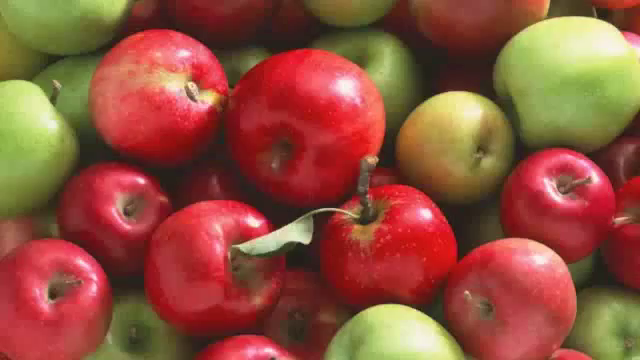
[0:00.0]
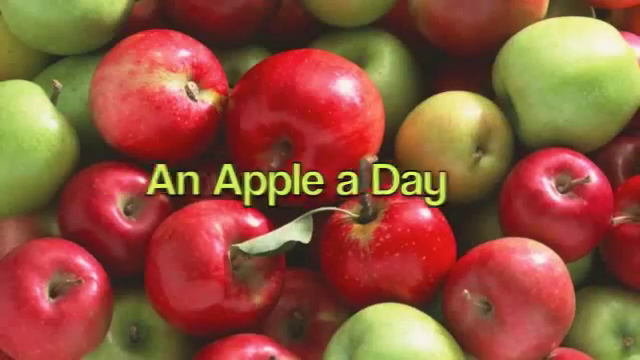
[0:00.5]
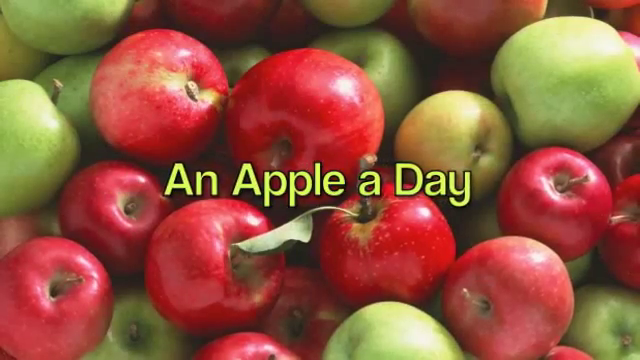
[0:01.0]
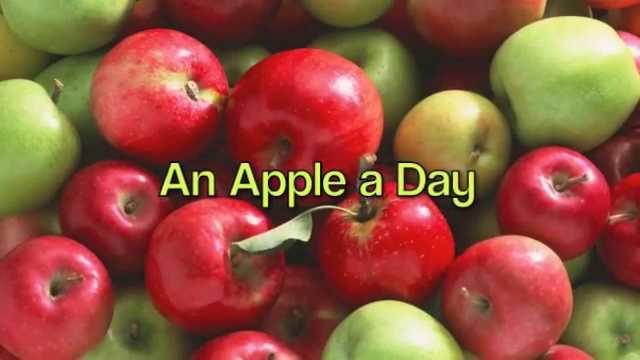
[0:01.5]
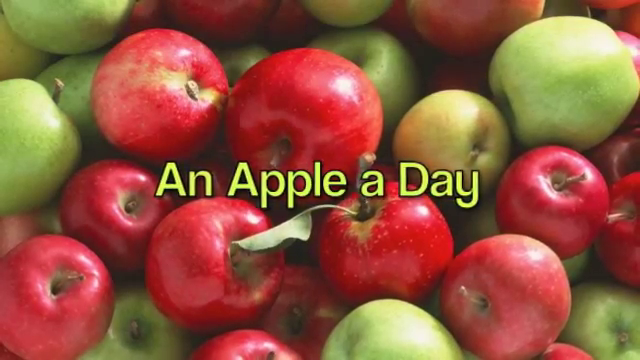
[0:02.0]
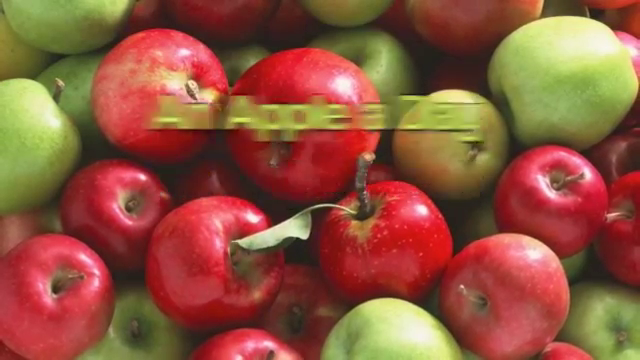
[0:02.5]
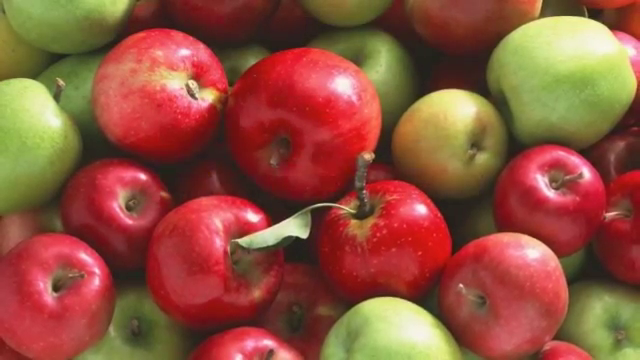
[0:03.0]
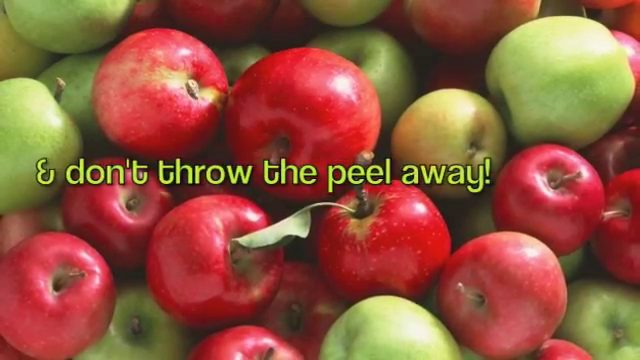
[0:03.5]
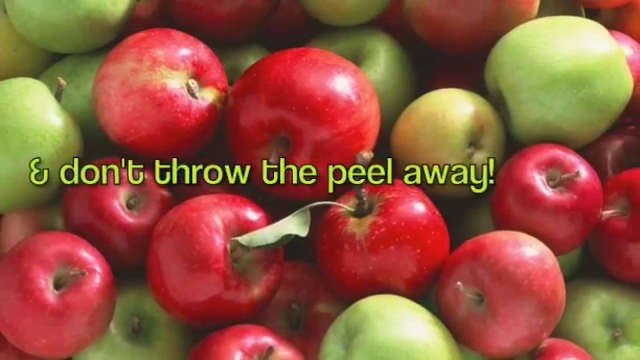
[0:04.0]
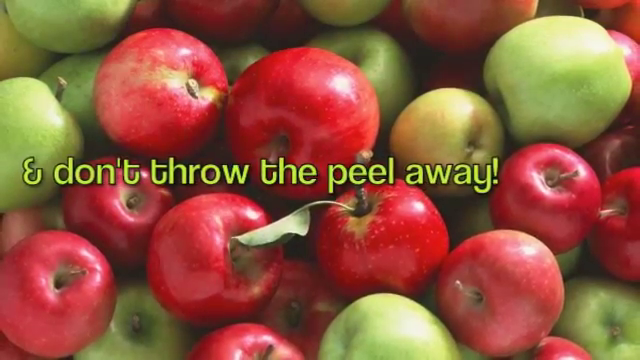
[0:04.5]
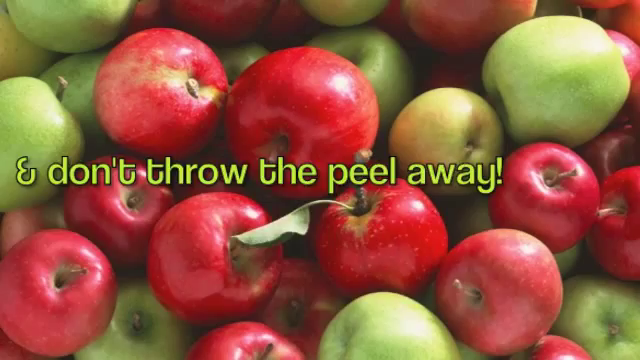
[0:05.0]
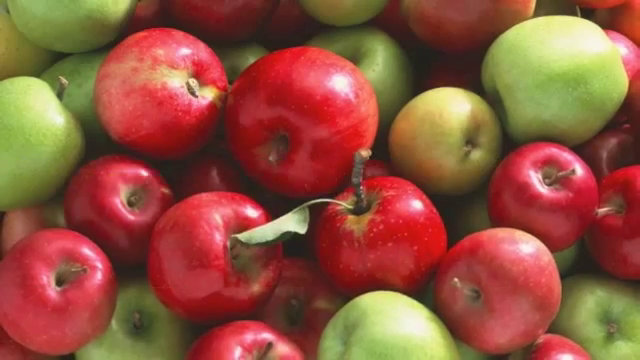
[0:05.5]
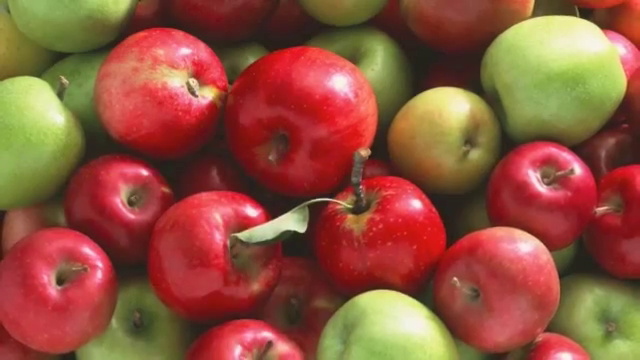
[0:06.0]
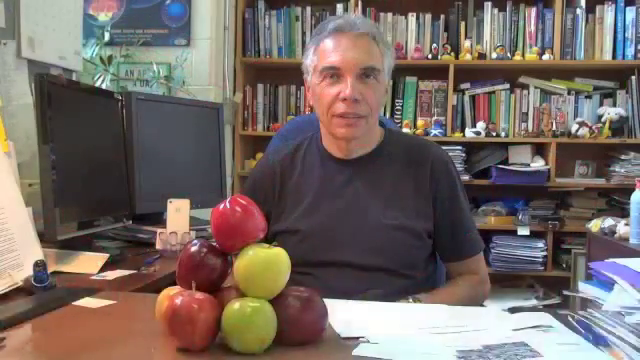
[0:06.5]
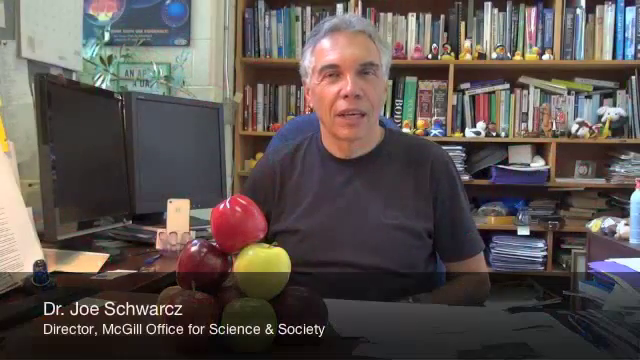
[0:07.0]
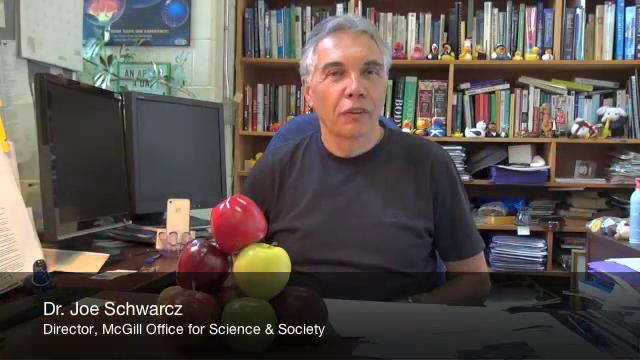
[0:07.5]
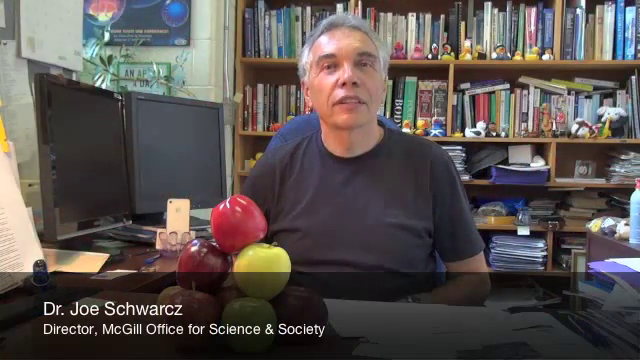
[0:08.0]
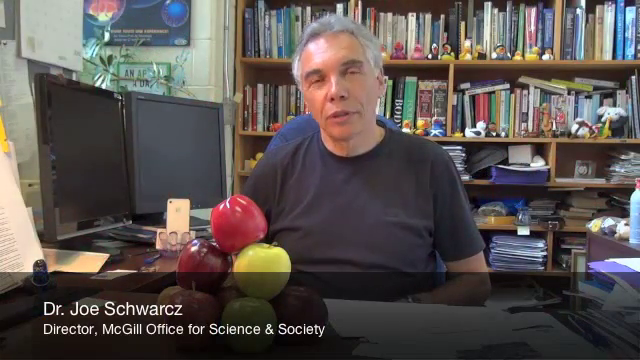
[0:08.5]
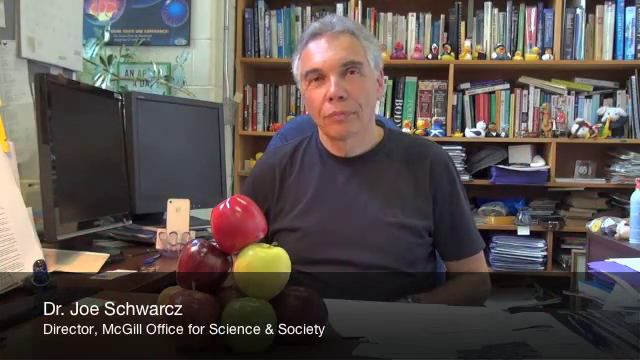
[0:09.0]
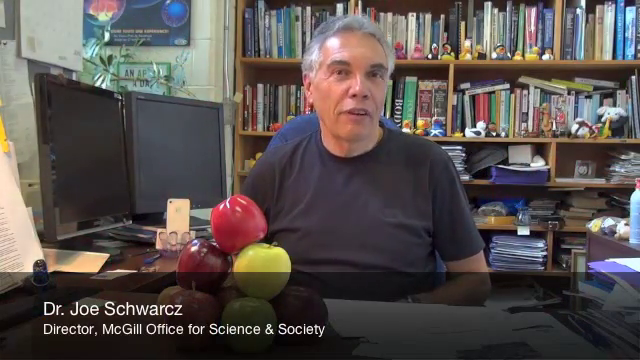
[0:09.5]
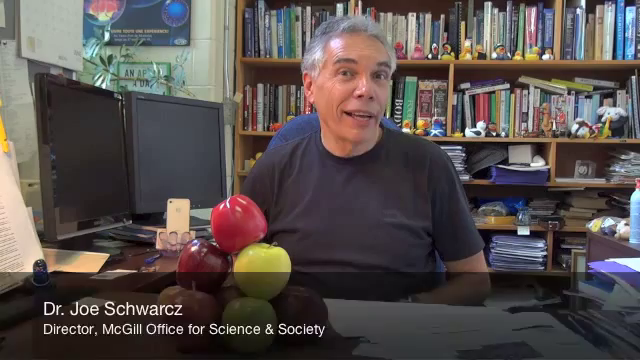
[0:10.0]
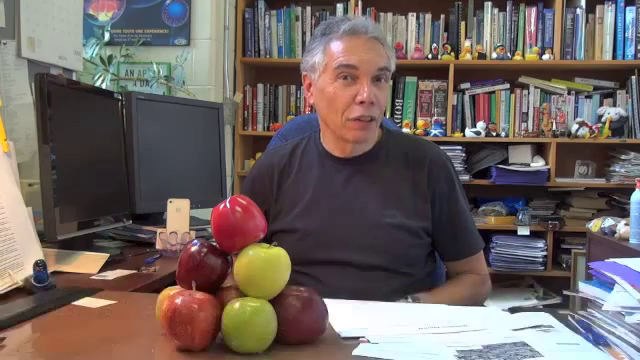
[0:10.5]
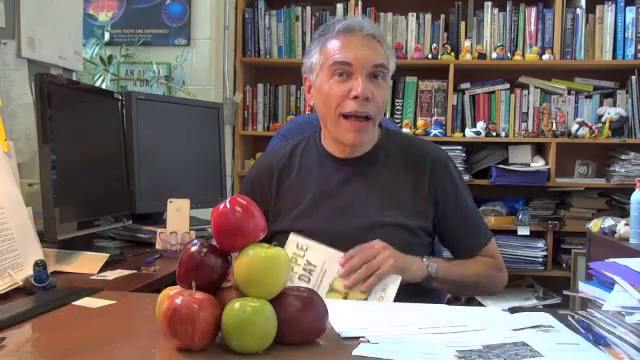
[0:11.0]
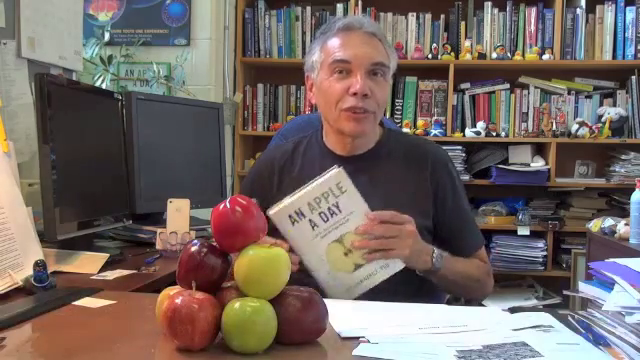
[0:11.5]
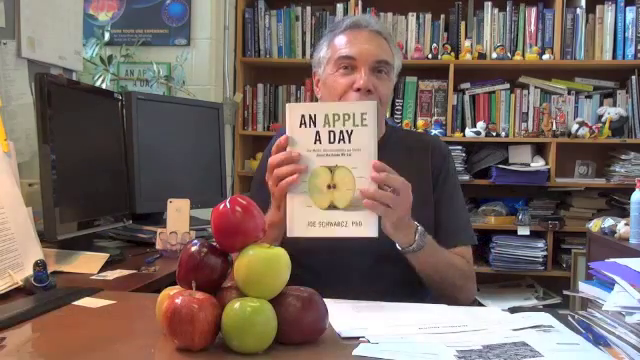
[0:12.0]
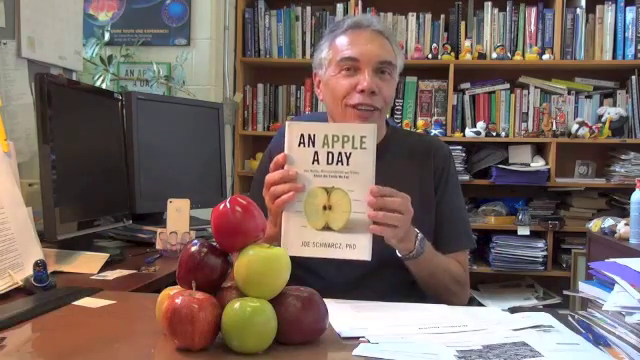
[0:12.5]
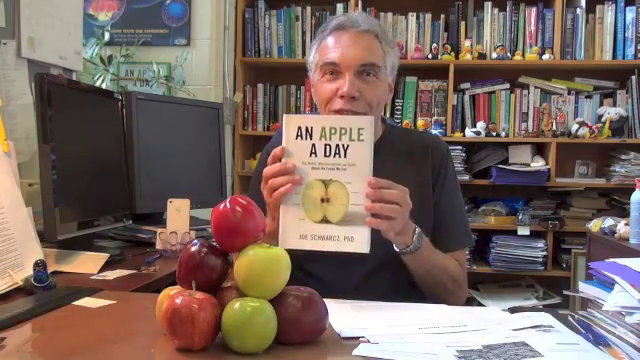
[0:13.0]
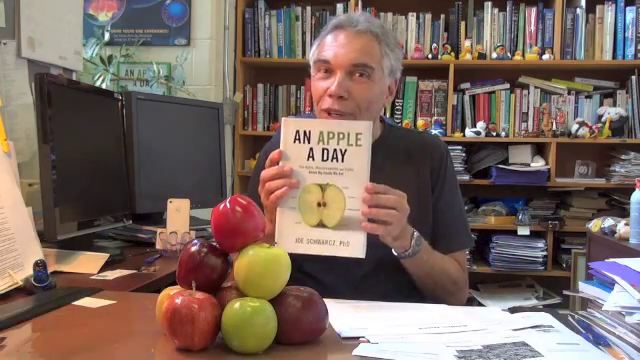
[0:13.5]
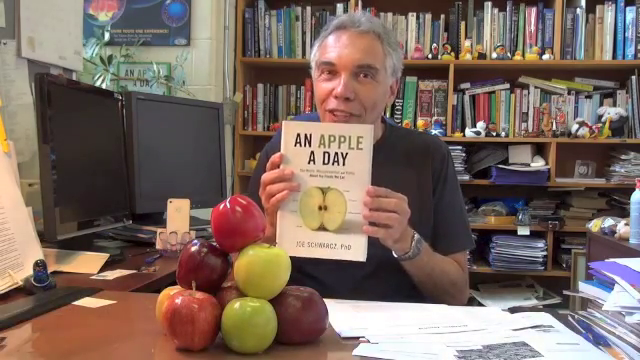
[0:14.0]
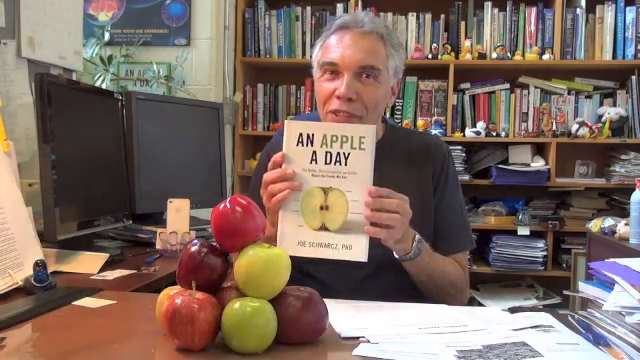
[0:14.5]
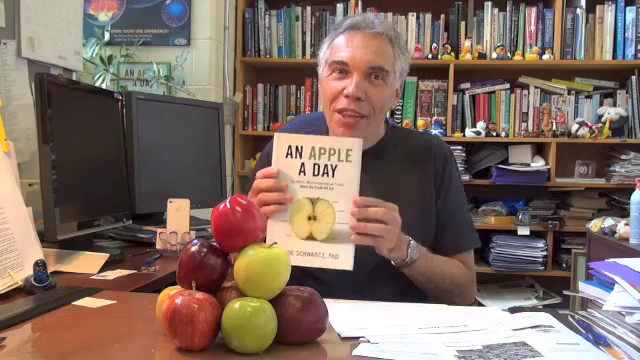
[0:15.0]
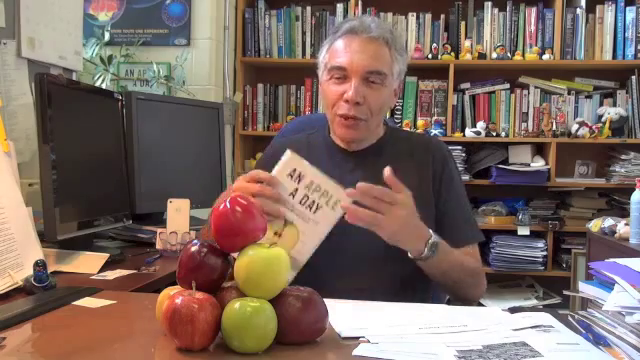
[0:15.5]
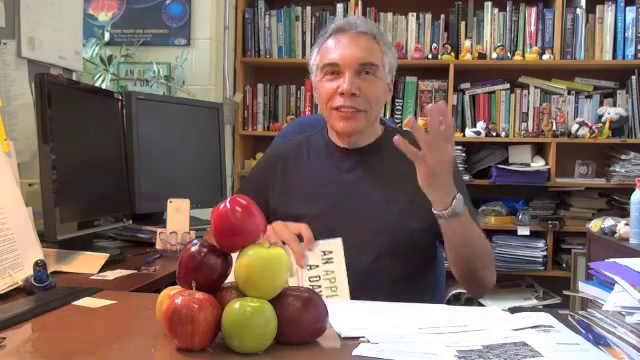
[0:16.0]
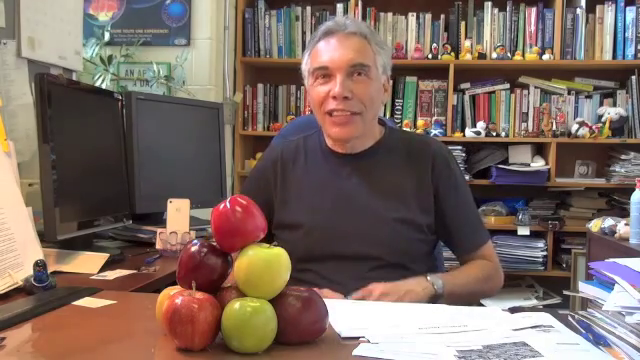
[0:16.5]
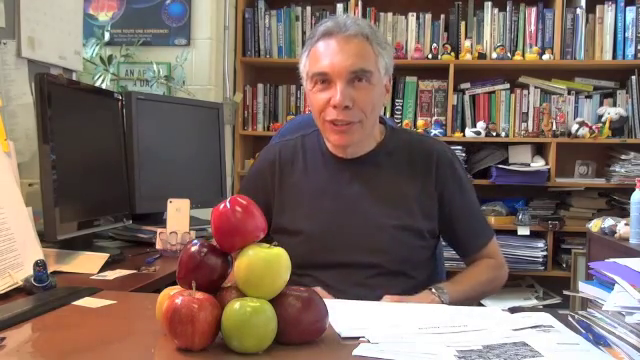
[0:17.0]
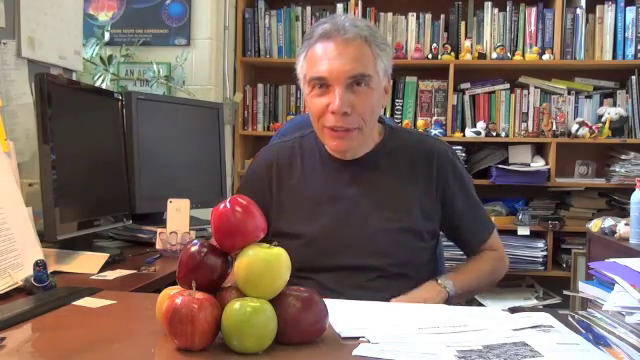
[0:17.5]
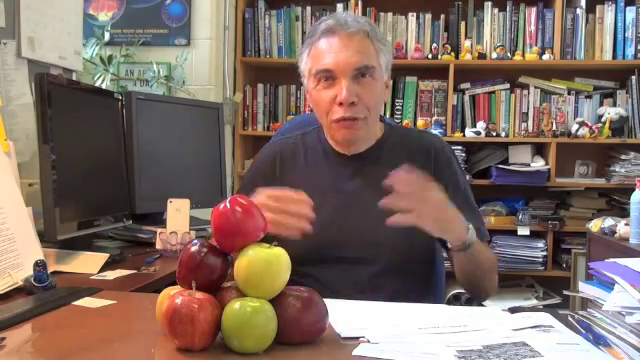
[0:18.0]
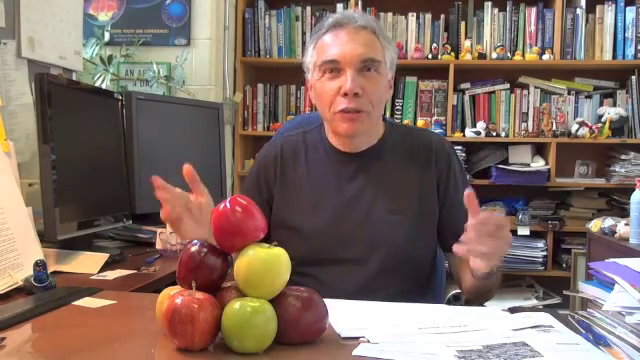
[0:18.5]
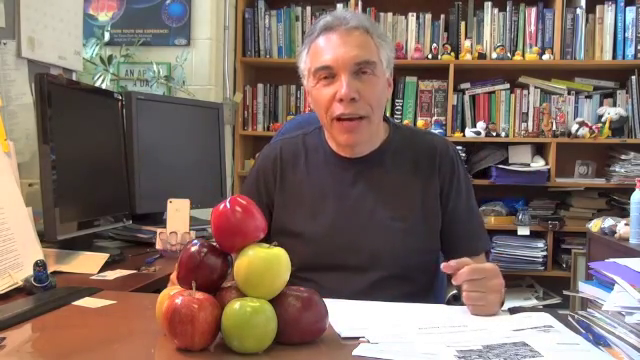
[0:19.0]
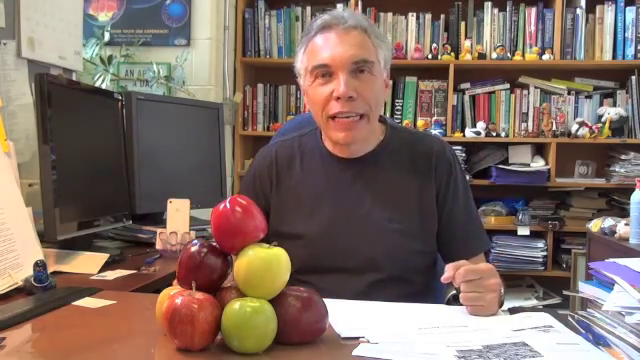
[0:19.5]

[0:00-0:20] The video opens on a still picture of many apples scattered across the frame, both red and green, a couple of them with leaves still attached to their stems. The words "an apple a day" in a lime green font come in from the left side of the screen, pause in the center, get a little larger, and move away to the top of the screen. Additional words, "and don't throw the peel away", then come in from the left, get bigger, and drop down to the bottom. The video cuts to a middle-aged man with gray hair wearing a black t-shirt, sitting in what appears to be a home office. Two computer monitors are to his right, and behind him are bookshelves completely packed with books and other items. Papers are on the desk in front of him, along with a stack of red, green and yellow apples. As he speaks, he holds up a book titled "An apple a day", whose cover is mostly white with a picture of a cut-open apple on the front. He sets the book back in his lap and talks to the camera, moving his hands as he speaks.